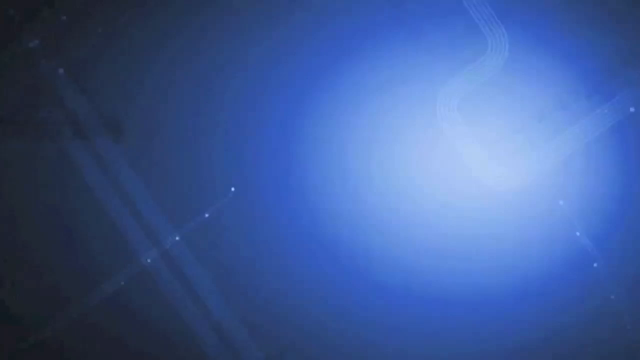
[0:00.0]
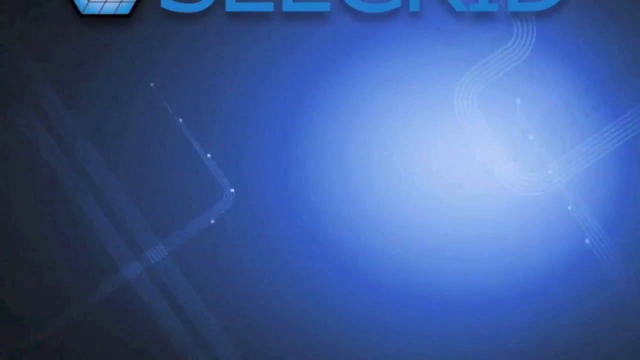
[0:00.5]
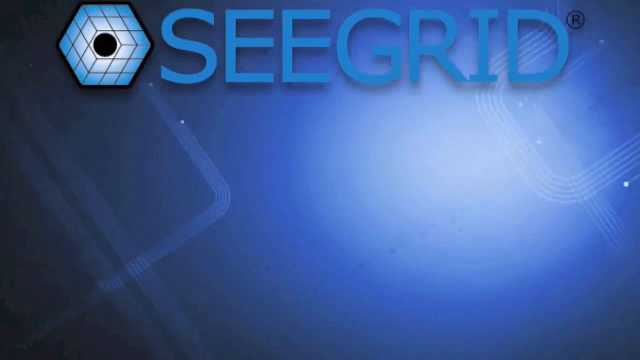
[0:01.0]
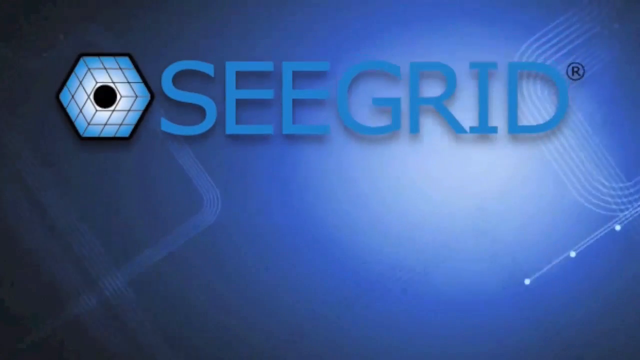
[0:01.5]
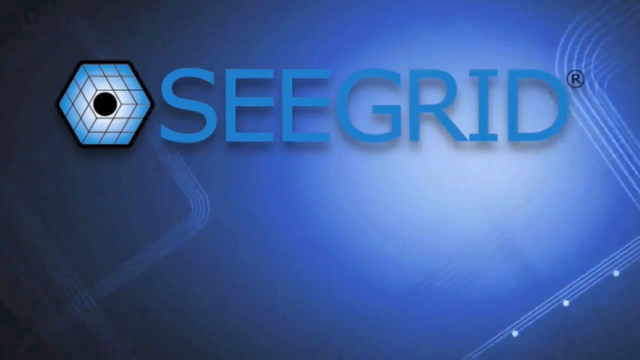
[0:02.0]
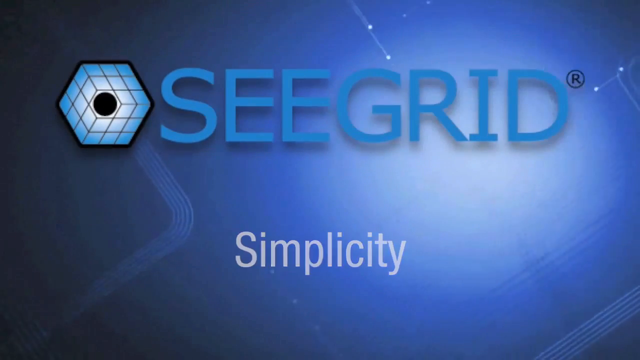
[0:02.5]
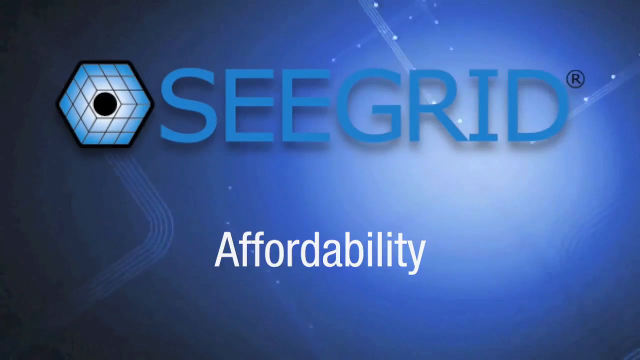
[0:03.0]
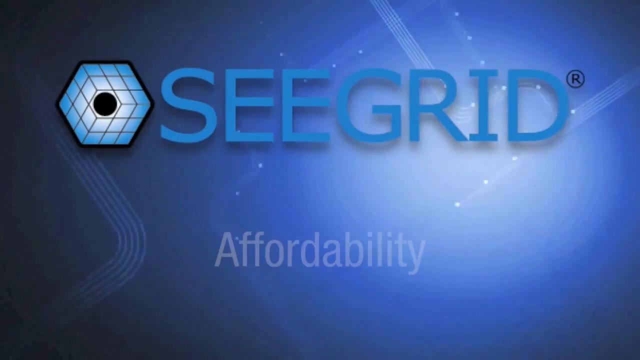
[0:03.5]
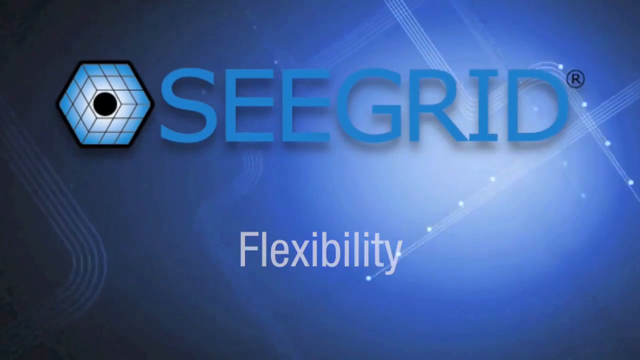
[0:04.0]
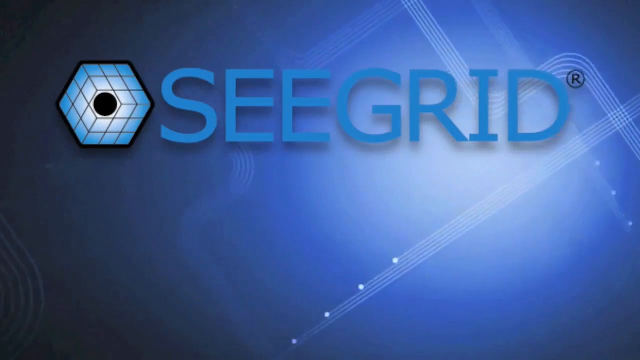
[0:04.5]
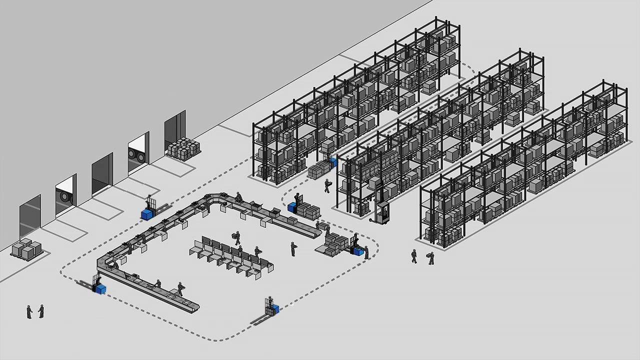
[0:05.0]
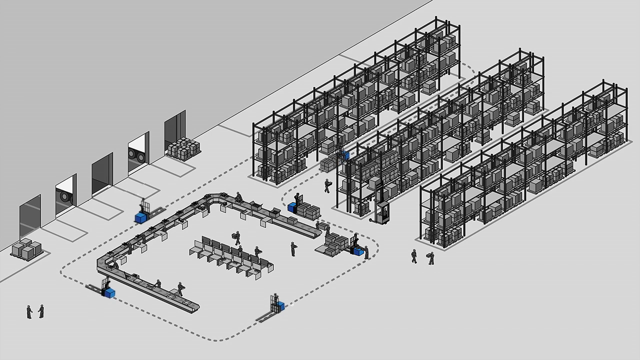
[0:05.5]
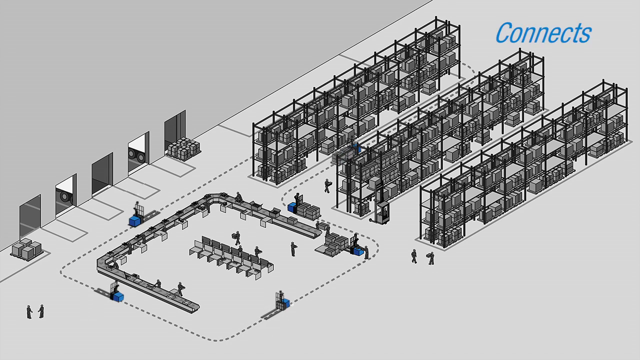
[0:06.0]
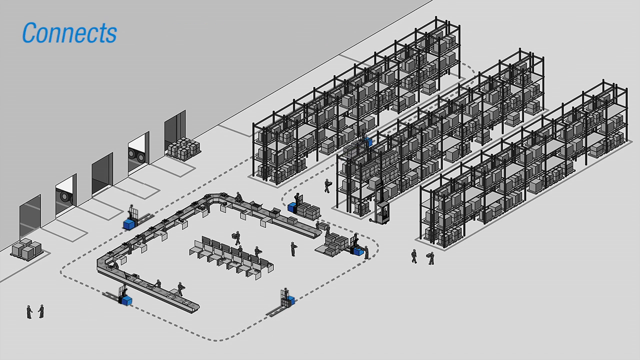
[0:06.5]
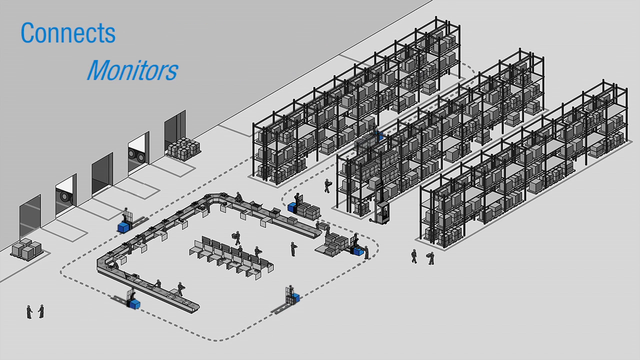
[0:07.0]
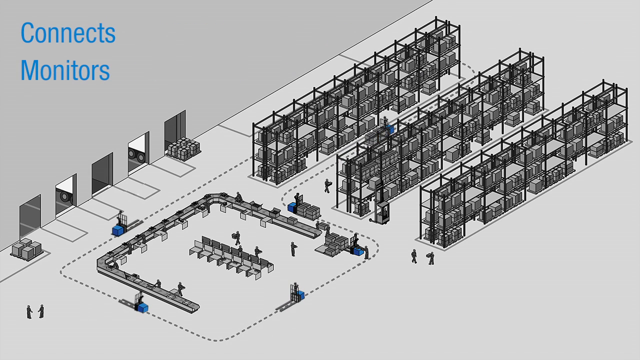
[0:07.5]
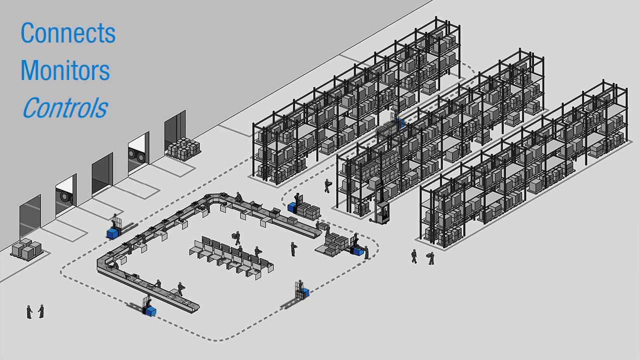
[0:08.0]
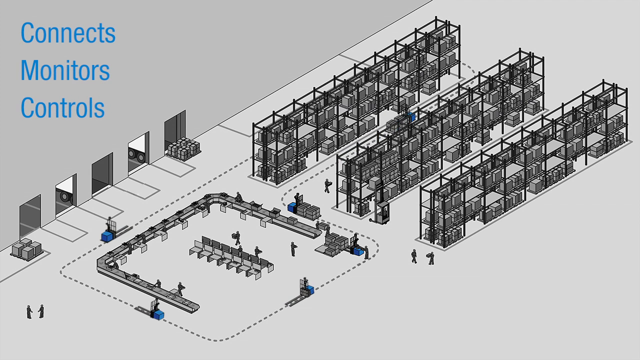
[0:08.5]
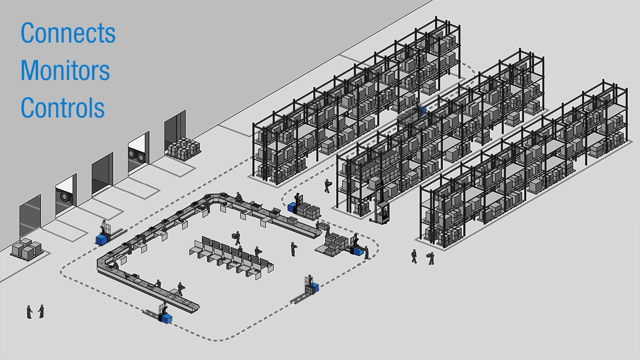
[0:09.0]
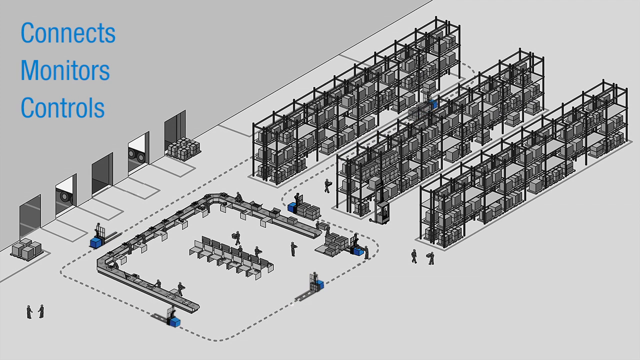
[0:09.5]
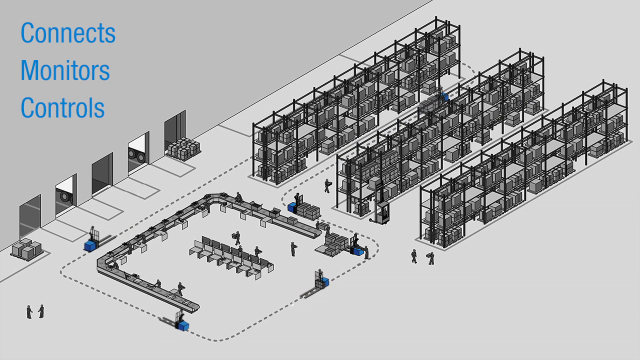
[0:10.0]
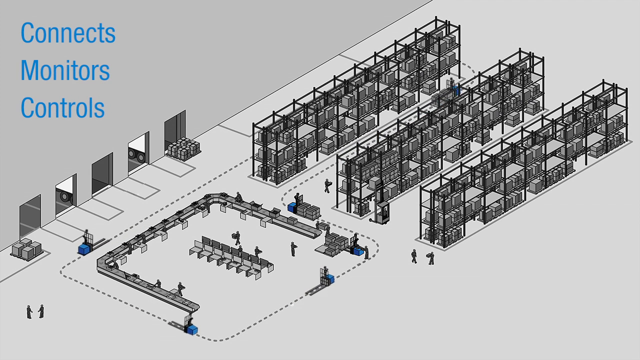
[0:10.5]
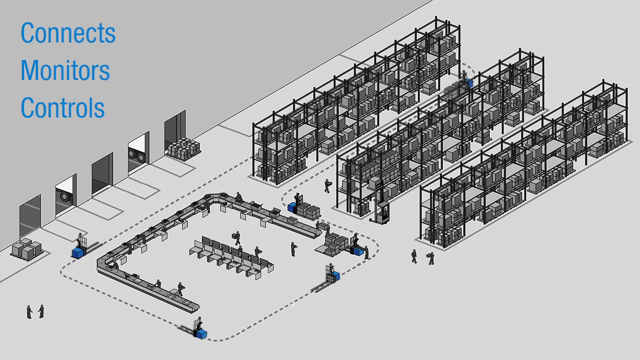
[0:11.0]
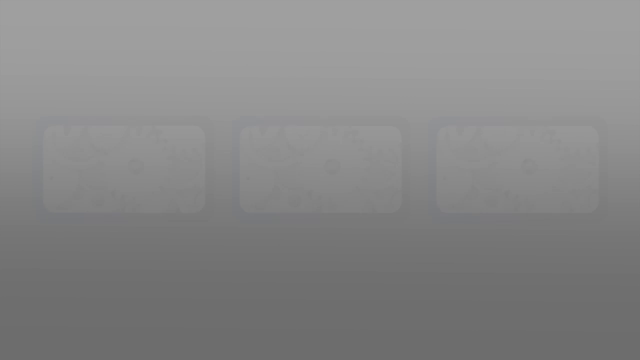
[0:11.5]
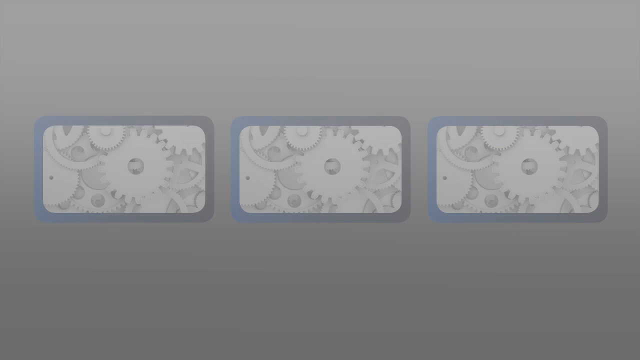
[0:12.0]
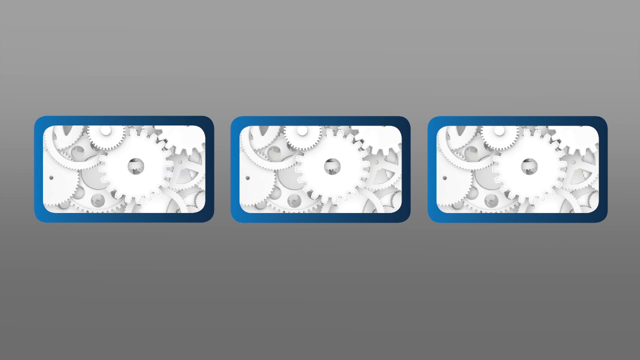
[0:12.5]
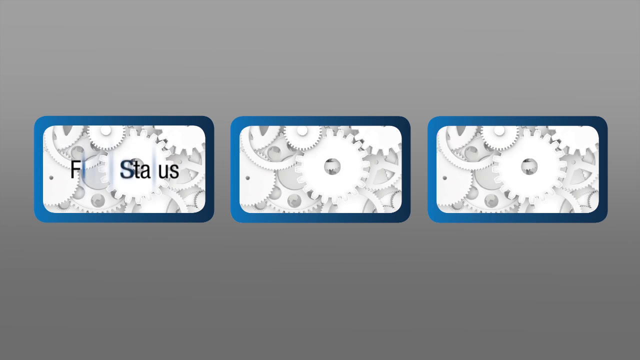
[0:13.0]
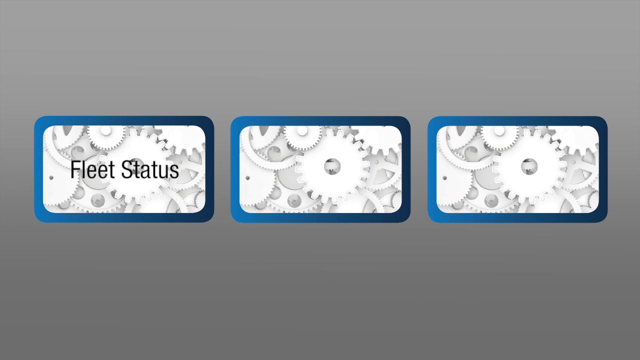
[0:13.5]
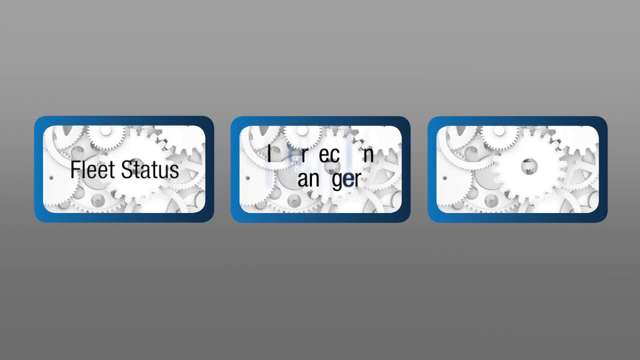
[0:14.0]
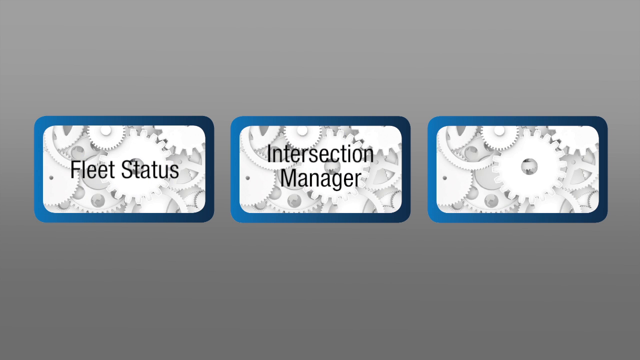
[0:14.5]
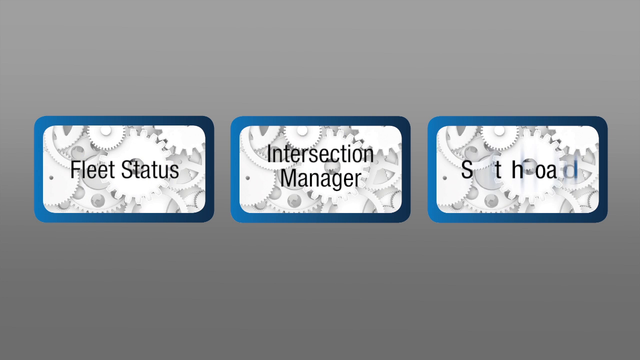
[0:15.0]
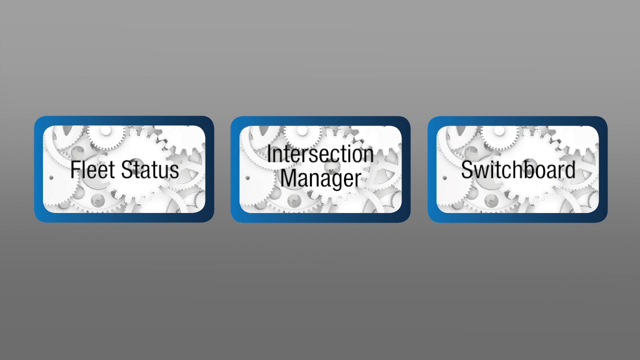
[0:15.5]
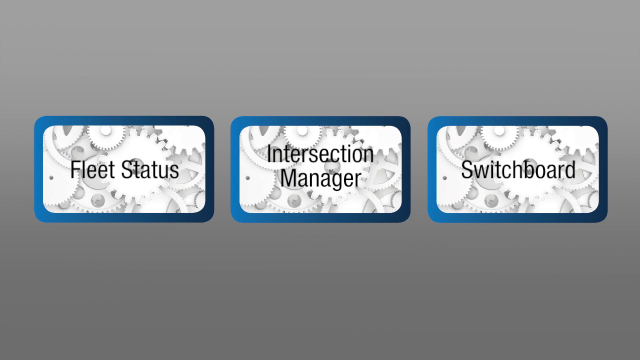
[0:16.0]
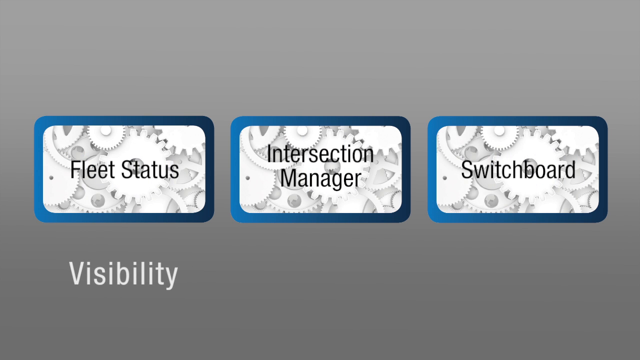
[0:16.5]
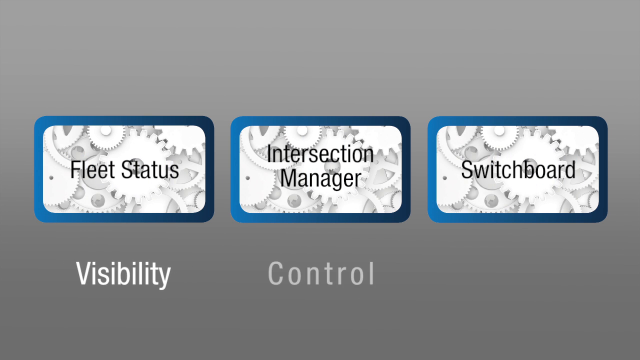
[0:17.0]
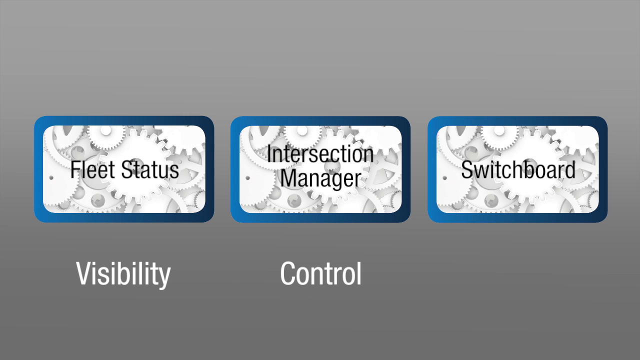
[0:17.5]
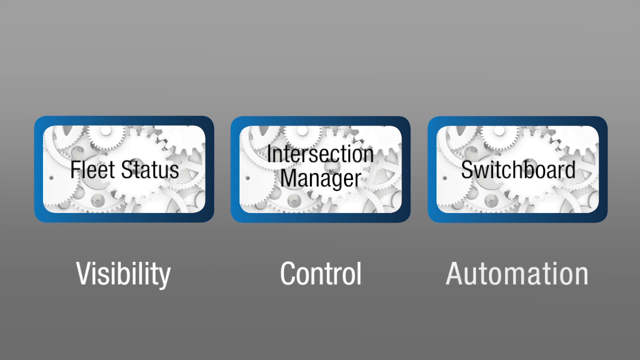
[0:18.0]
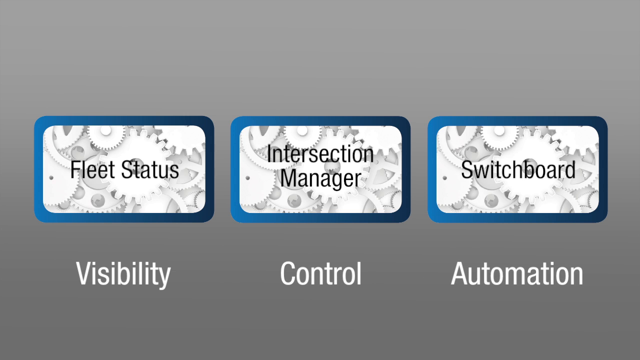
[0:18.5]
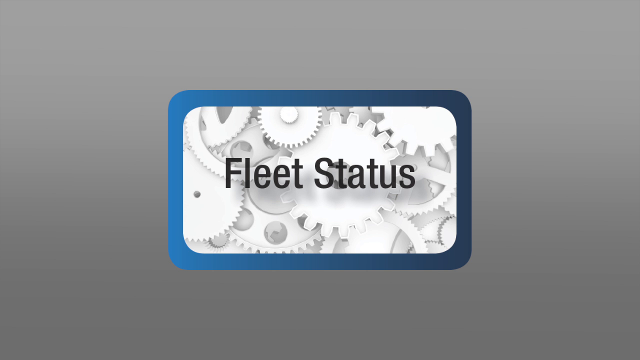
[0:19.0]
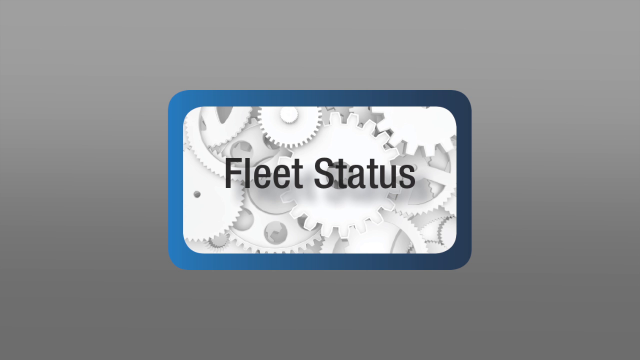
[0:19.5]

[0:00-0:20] An advert for Seagrid displays the words "Seagrid flexibility, affordability, and simplicity." Different shades of blue are used, and there is an animation, game-like in style, where it is written "you connect monitors and controls." The advert then shows this applied to fleet status, intersection manager and switchboard, with the fleet status containing a lot of things.